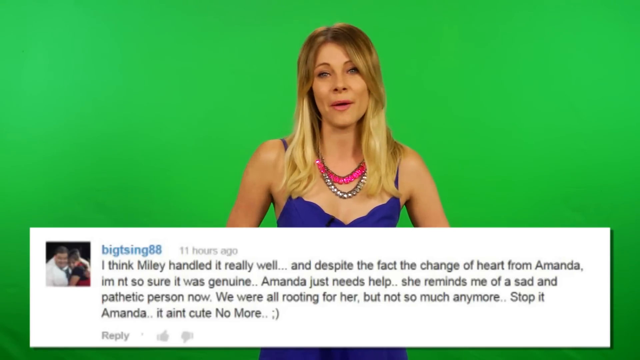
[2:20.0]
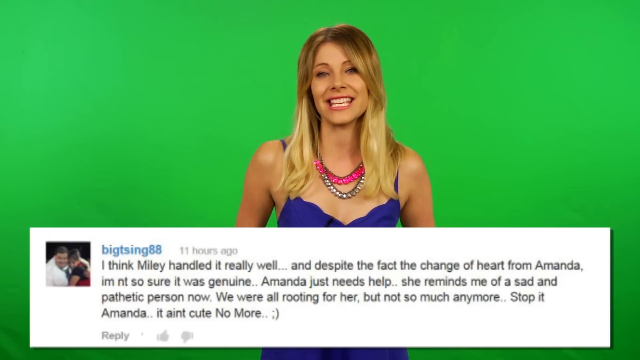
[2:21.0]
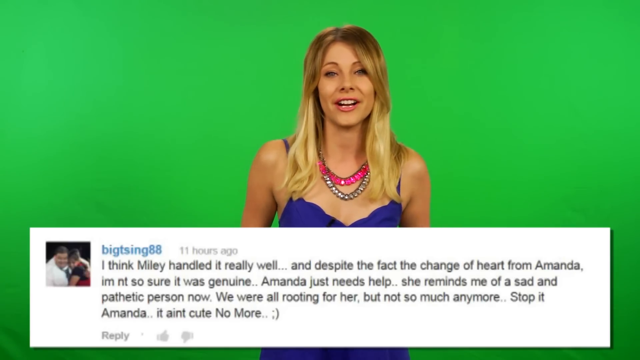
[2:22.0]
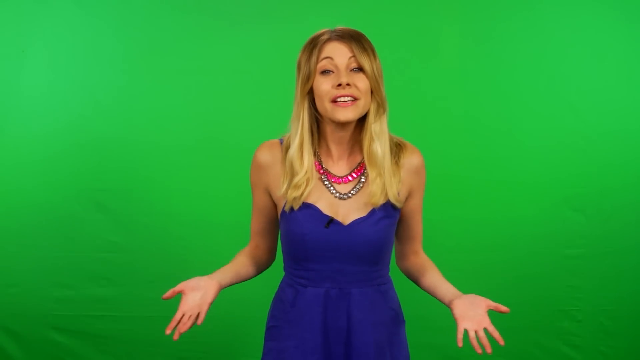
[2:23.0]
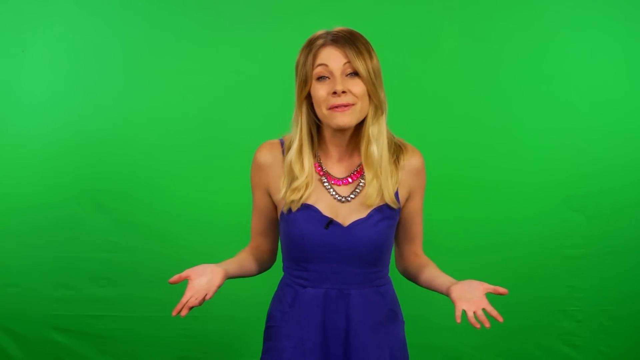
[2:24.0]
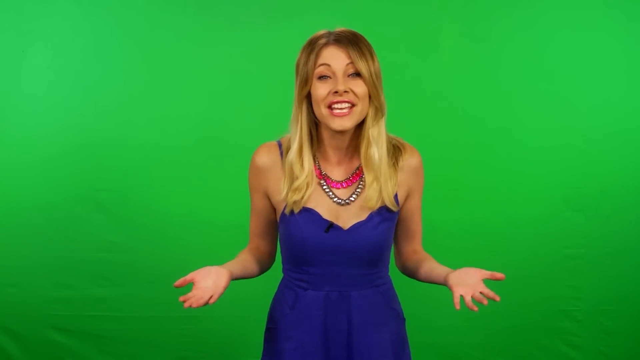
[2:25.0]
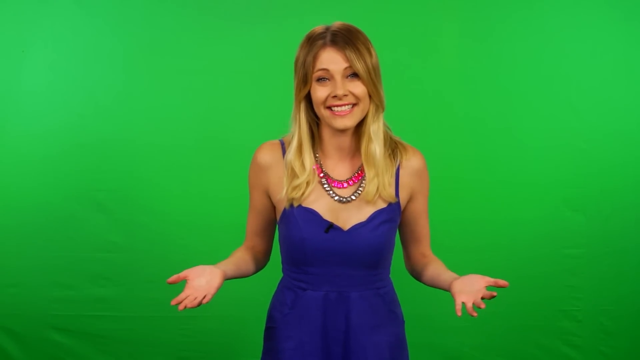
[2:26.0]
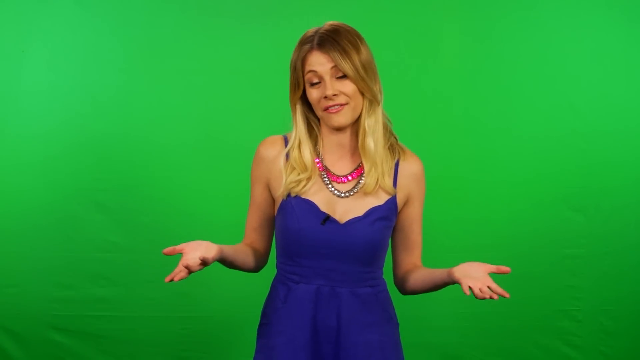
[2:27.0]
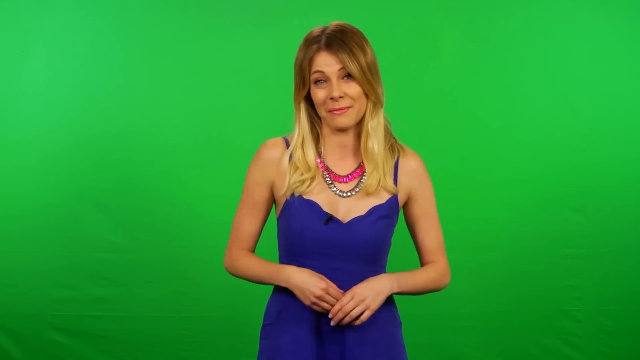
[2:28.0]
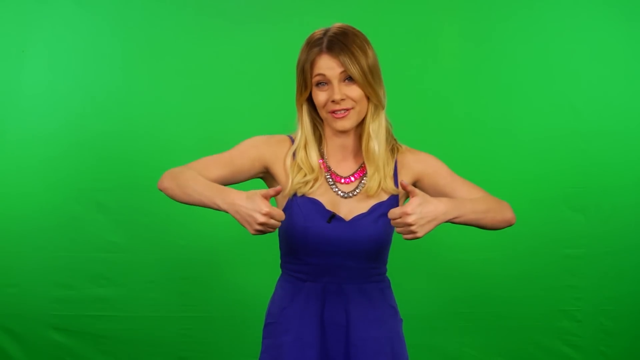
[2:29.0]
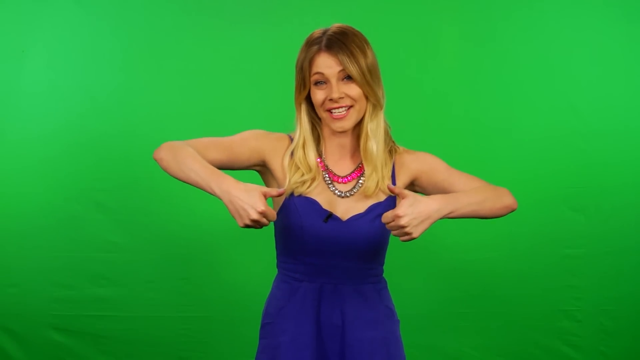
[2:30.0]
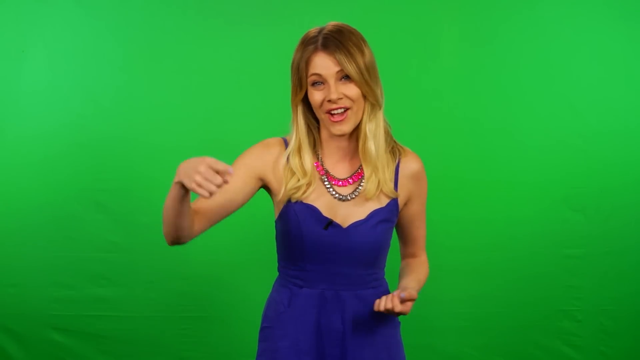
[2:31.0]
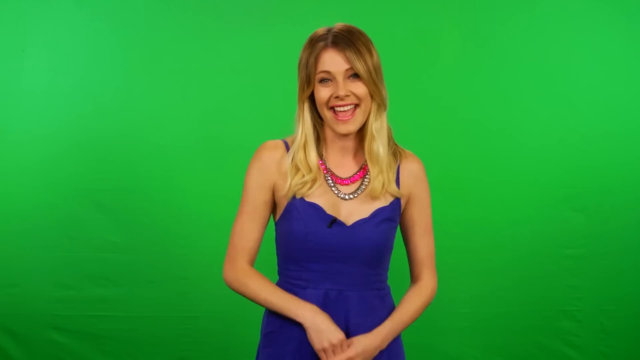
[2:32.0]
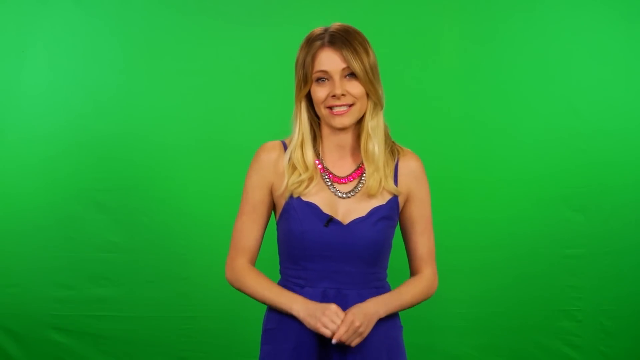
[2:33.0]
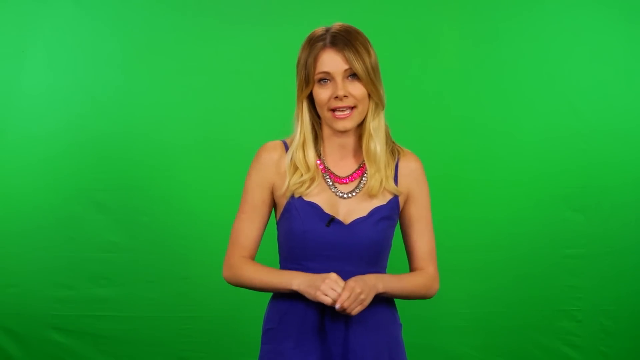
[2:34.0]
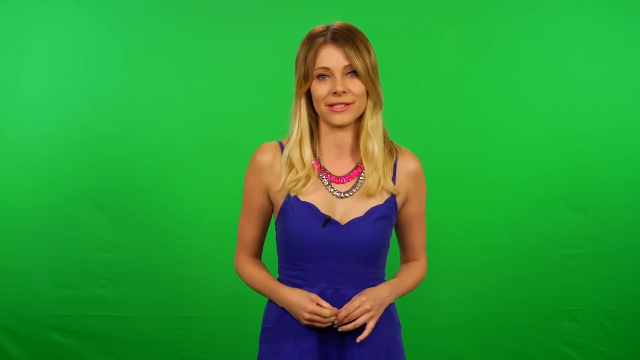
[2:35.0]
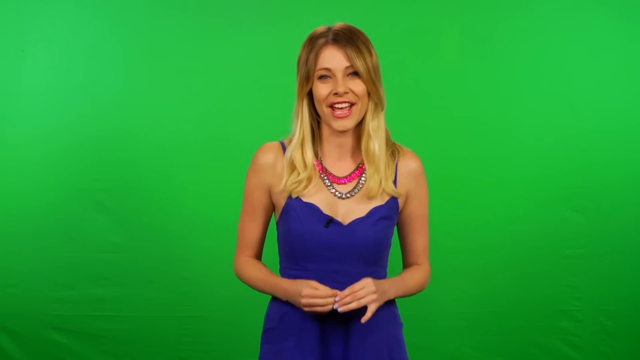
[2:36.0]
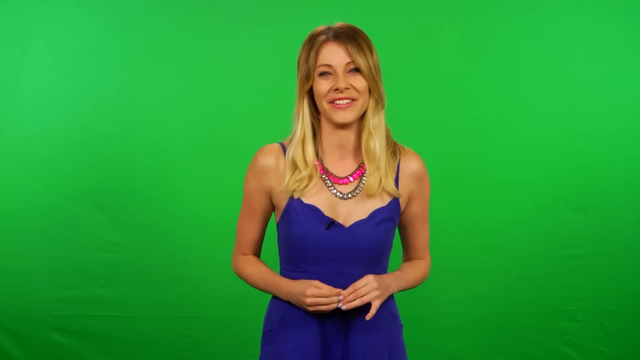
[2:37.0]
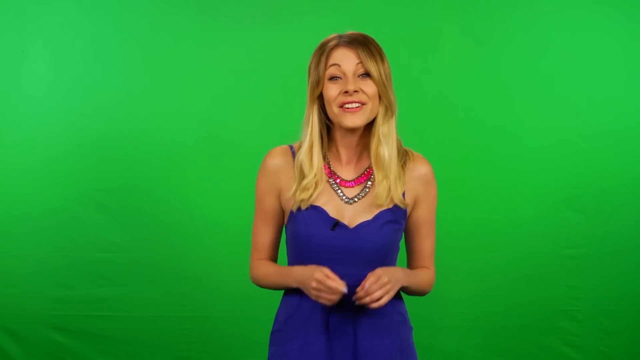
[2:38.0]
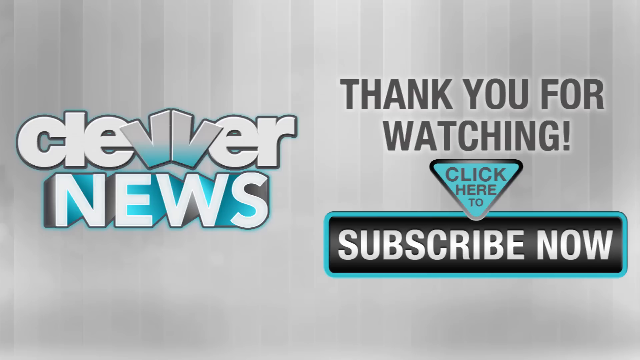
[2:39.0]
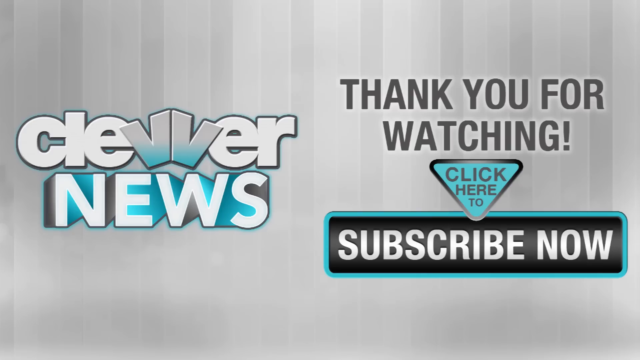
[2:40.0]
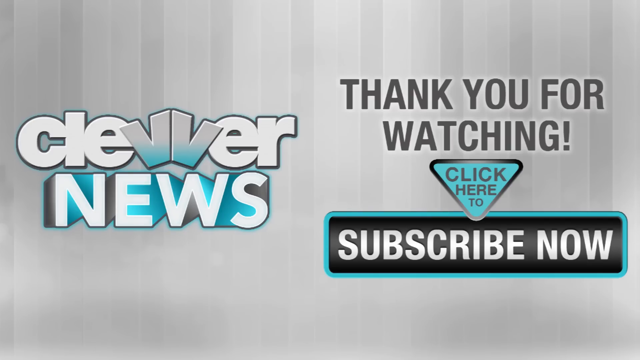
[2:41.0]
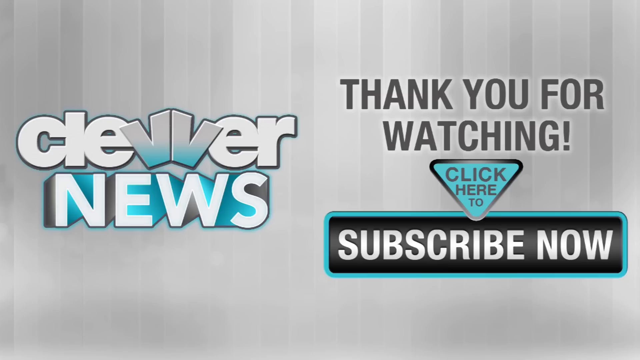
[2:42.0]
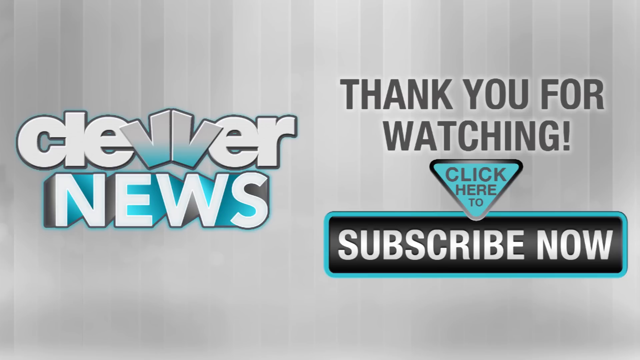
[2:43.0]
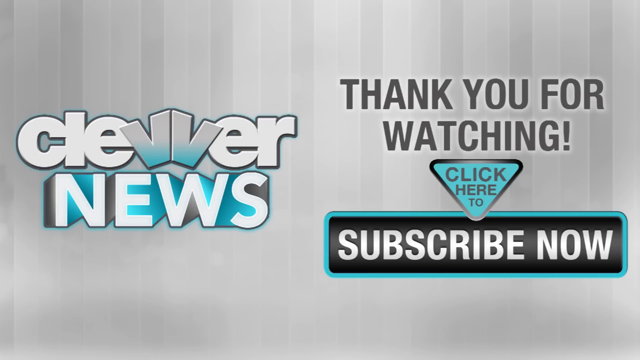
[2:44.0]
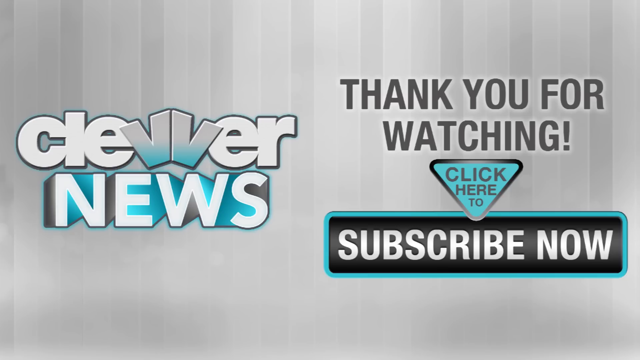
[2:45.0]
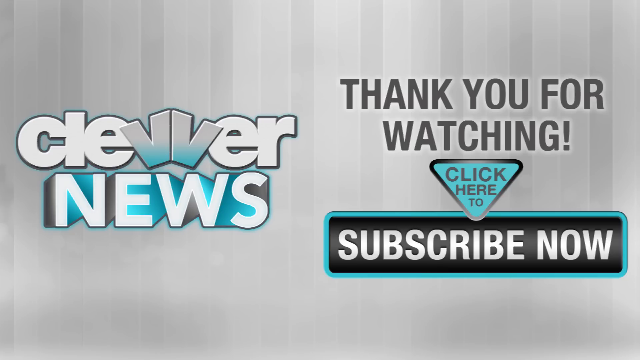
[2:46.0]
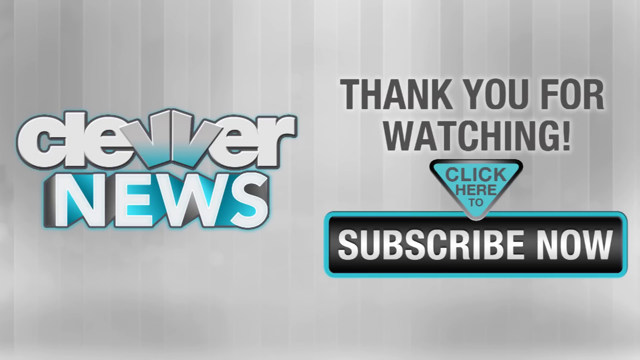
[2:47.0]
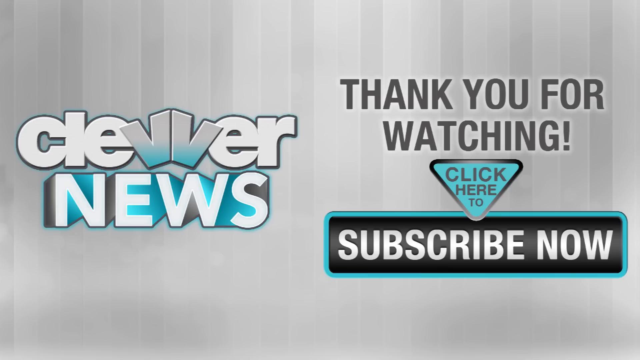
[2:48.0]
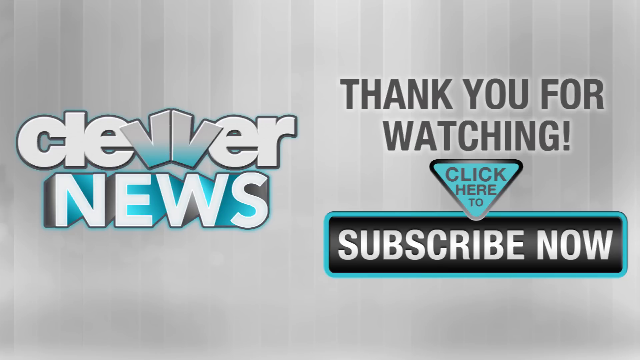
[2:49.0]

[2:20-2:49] The blonde-haired lady talks in front of a big green background, wearing a blue dress or romper and a pink necklace, and talking a lot with her hands. A tweet about Miley Cyrus and Amanda Bynes comes on the screen, beginning "I think Miley handled it really well" and including "I'm not so sure it was genuine. Amanda just needs help... We are all rooting for her, but not so much anymore. Stop it, Amanda. It ain't cute no more." The lady smiles a lot, gives the audience a thumbs up, keeps talking and points at the audience. Finally the screen reads "Clever News. Thank you for watching" along with a prompt to "subscribe now."